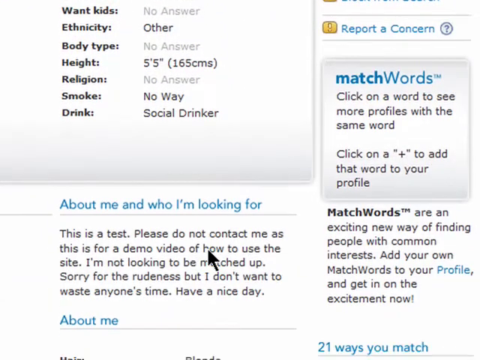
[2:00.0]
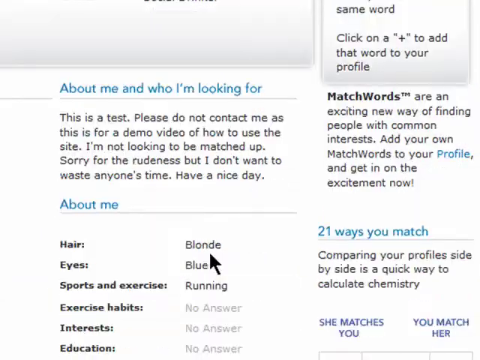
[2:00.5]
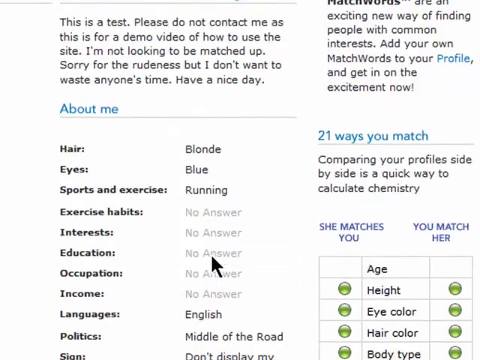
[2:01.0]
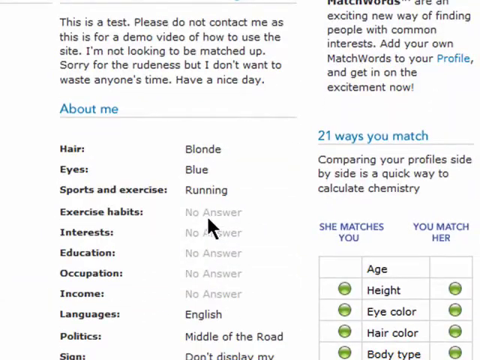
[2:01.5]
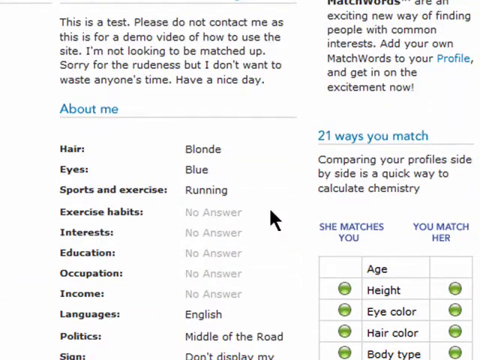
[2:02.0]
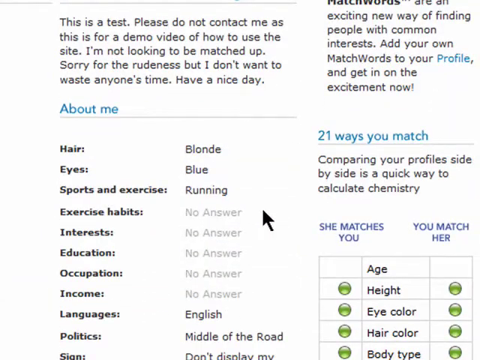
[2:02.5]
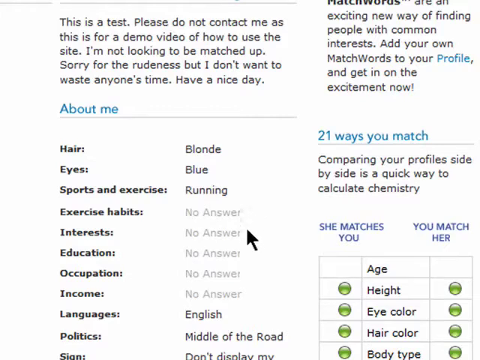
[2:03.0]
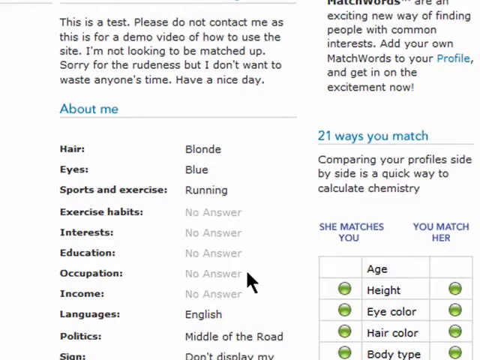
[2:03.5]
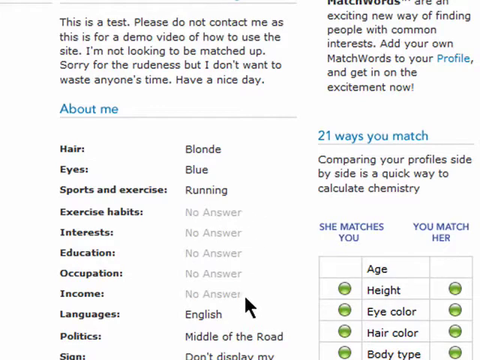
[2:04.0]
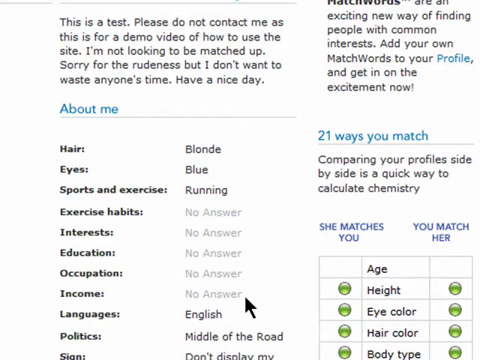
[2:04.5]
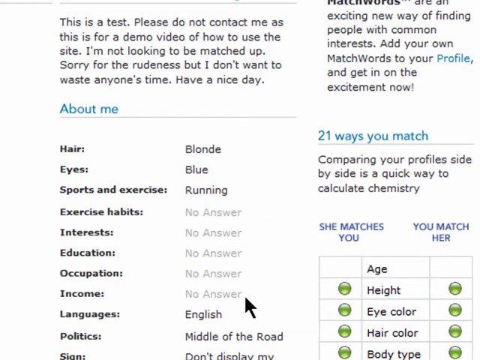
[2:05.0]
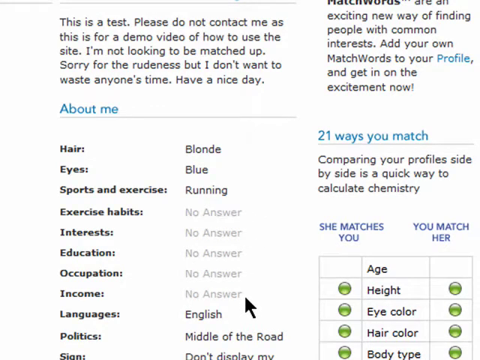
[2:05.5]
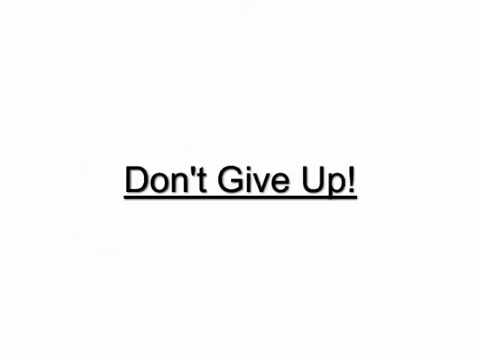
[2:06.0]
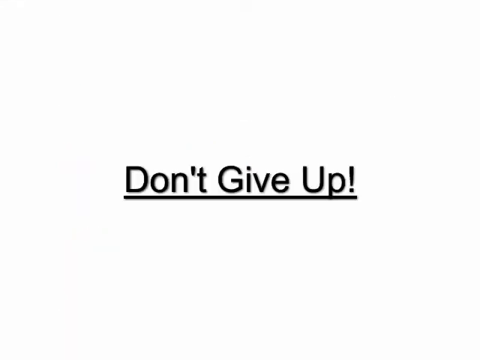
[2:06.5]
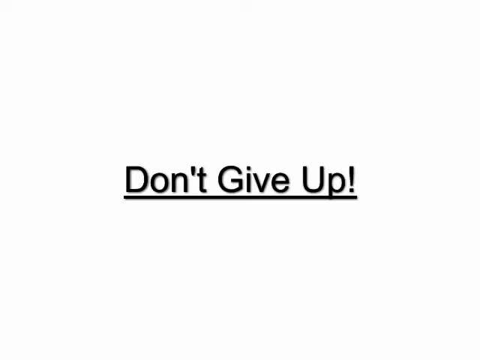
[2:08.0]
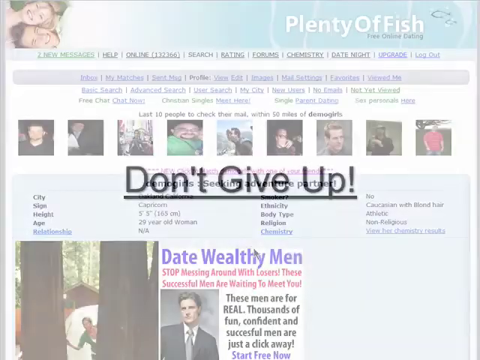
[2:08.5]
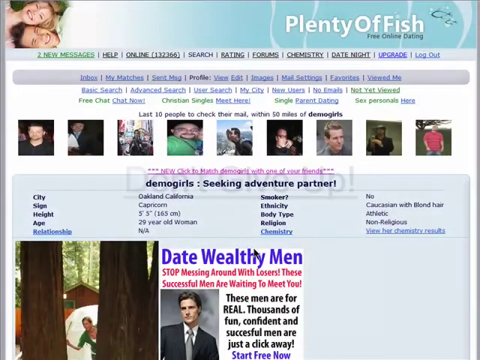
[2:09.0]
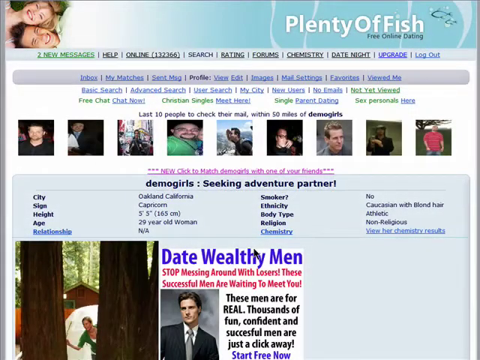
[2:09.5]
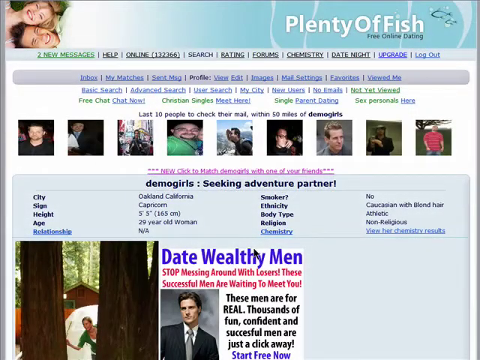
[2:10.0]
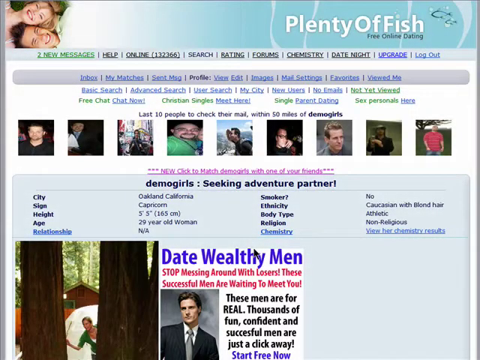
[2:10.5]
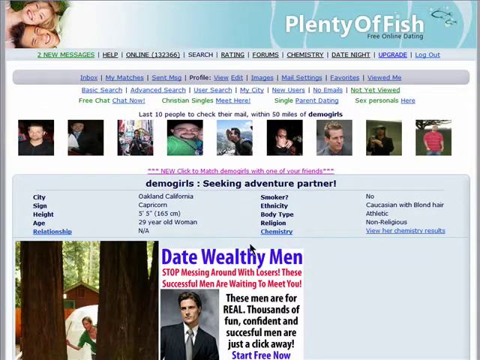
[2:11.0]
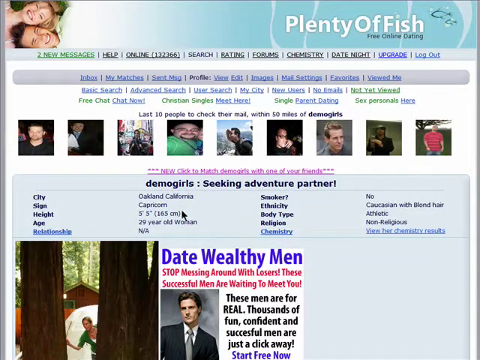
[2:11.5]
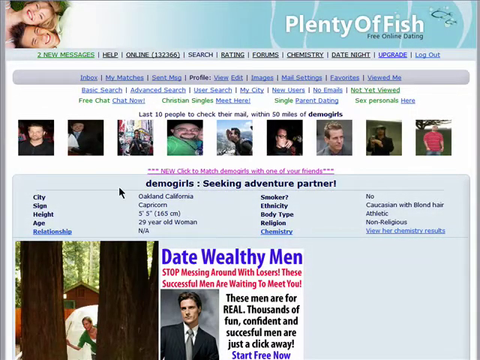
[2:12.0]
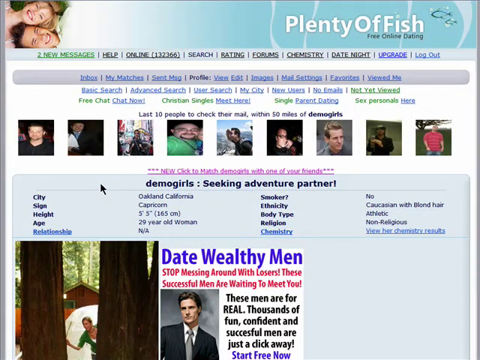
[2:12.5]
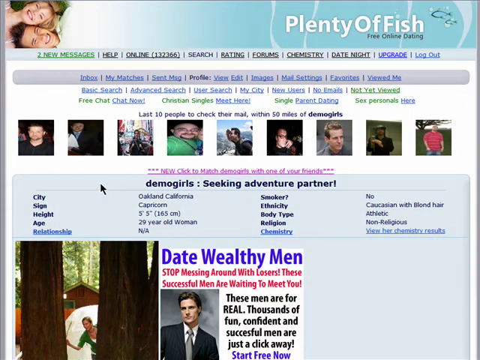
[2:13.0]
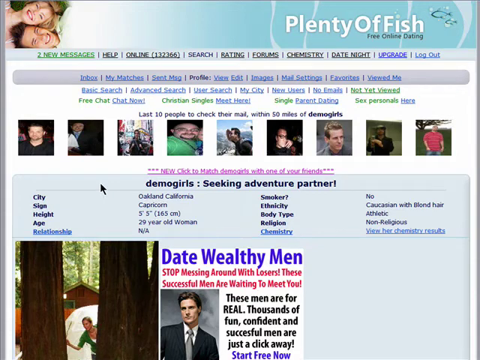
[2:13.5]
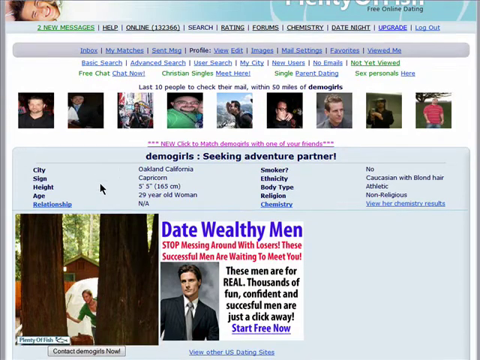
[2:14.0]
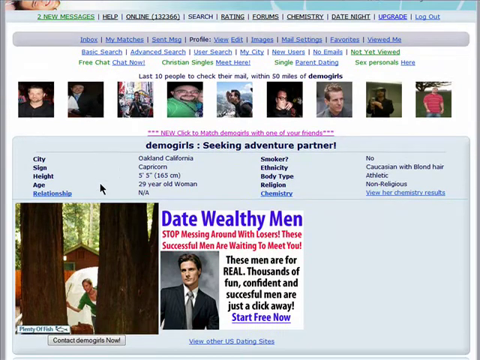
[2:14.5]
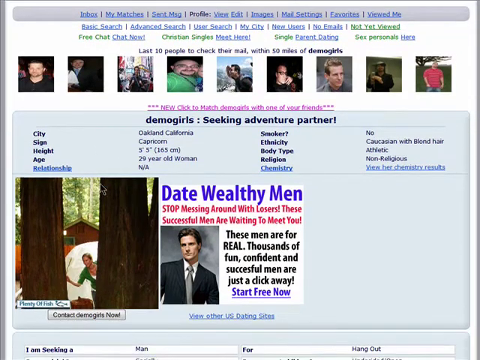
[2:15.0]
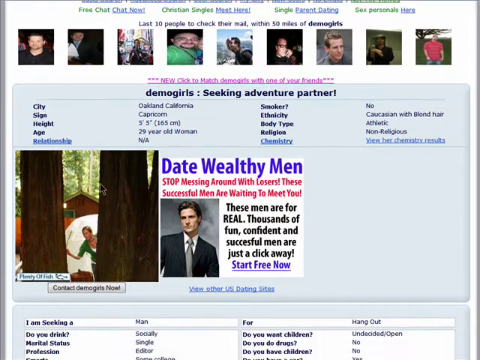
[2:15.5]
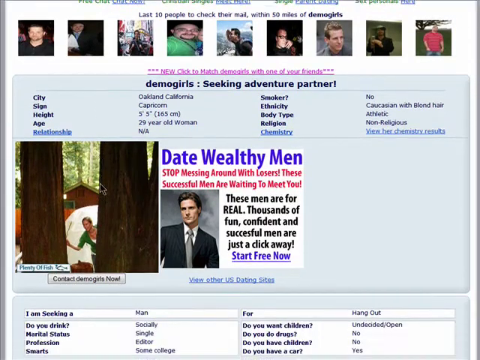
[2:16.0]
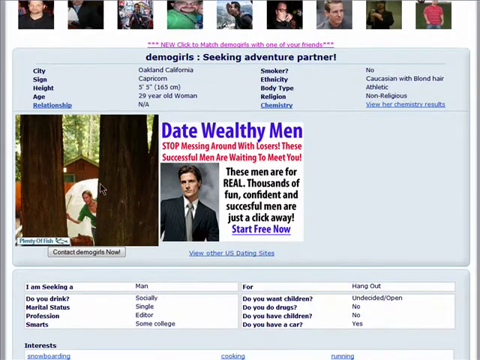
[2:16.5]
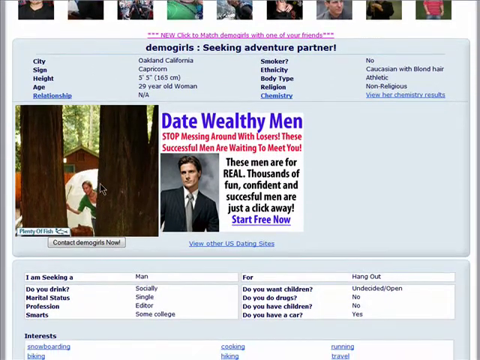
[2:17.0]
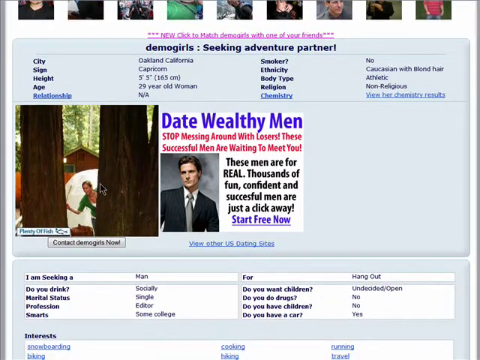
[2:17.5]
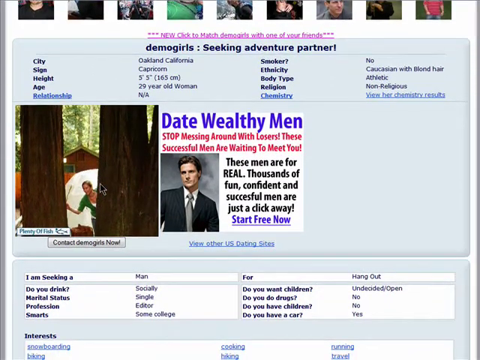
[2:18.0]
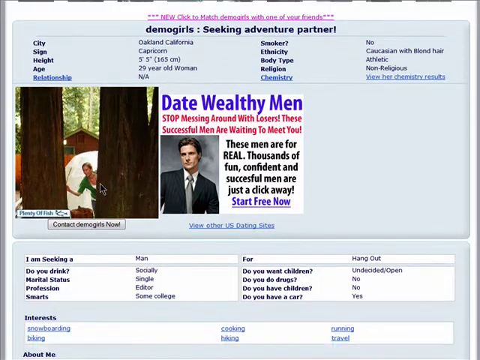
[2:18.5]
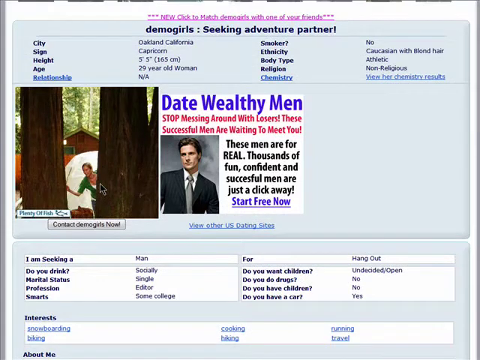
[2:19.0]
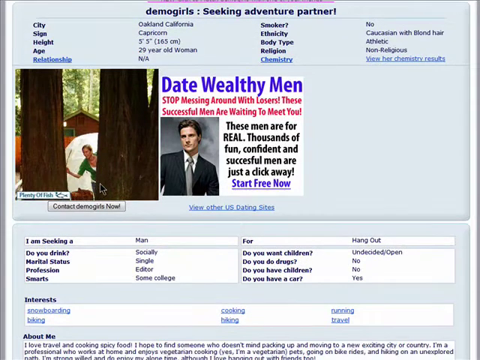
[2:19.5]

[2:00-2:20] A screenshot of a match.com profile initially shows just the lower left quarter of the box containing demographic information, which has a gray background with bold text for the categories and lighter text for the answers. Underneath is a small paragraph with a blue title reading "about me and who I'm looking for". On the right-hand side is a card with a blue title reading "Matchwords" and the description "click on a word to see more profiles with the same word. Click on a plus to add that word to your profile." The page scrolls down, and a black arrow cursor highlights a second About Me section listing basic features such as hair, eyes, sports and exercise, and body type. This fades out to a white screen with black text reading "don't give up". Next comes a screenshot of a Plenty of Fish profile page with multiple navigation menus under the title bar. Below the navigation is a horizontal row of square pictures in a section titled "the last 10 people to check their mail within 50 miles of Demo Girls". Underneath is a blue card with basic demographics and two images below it.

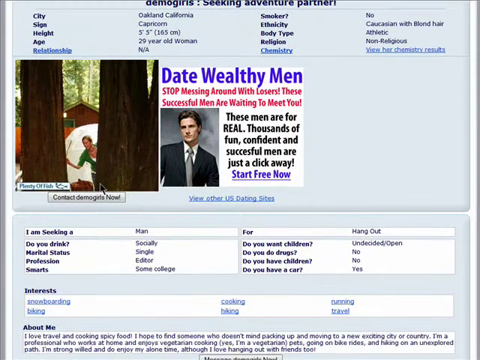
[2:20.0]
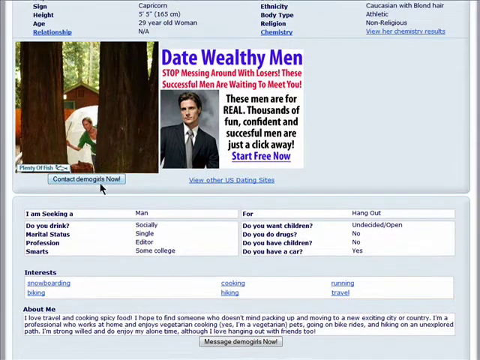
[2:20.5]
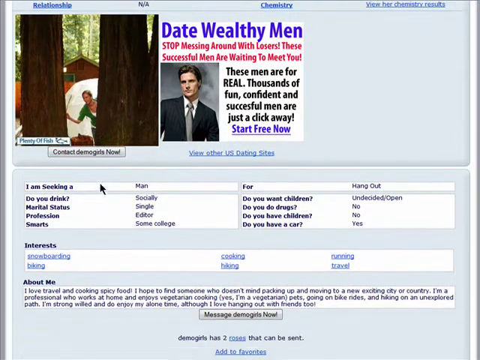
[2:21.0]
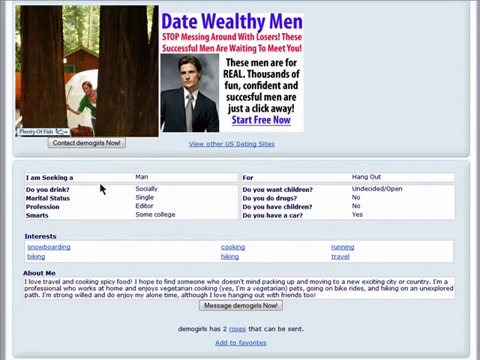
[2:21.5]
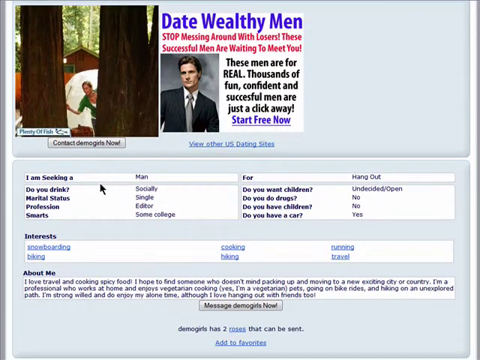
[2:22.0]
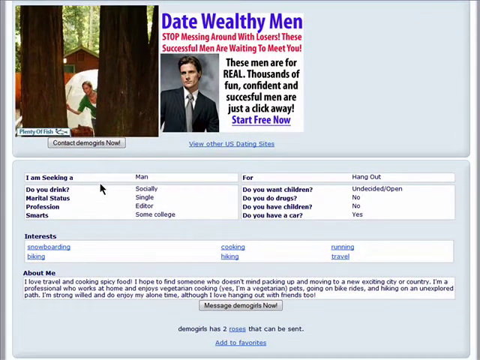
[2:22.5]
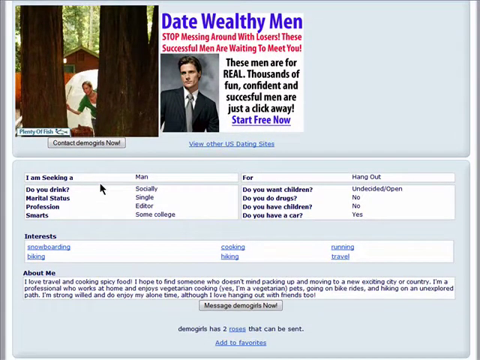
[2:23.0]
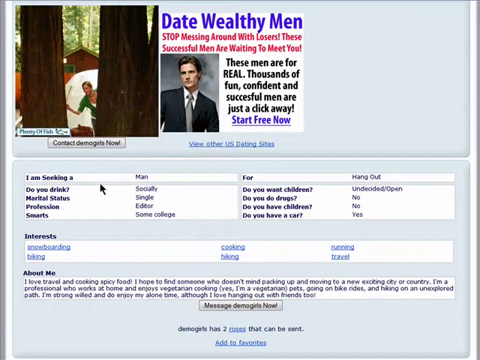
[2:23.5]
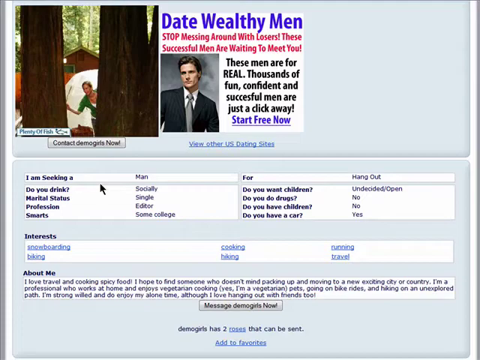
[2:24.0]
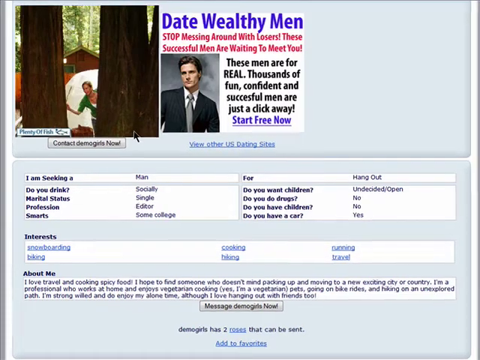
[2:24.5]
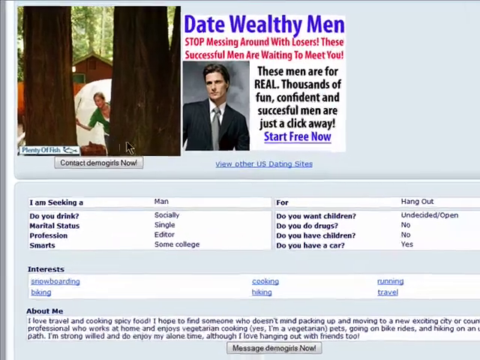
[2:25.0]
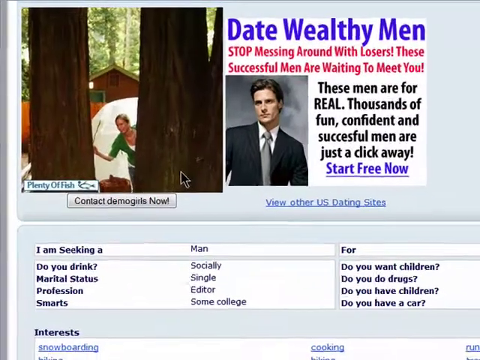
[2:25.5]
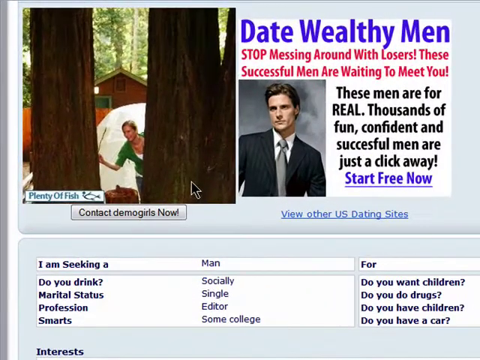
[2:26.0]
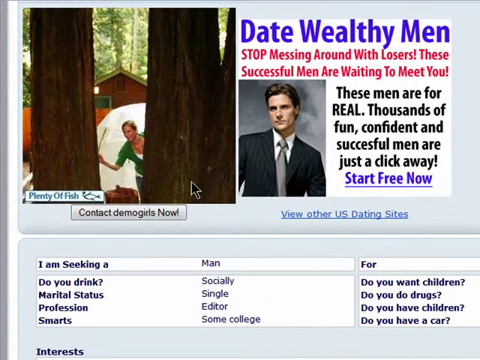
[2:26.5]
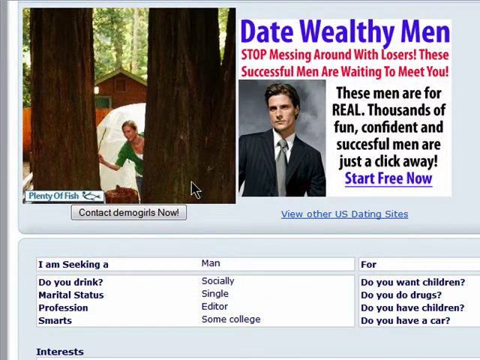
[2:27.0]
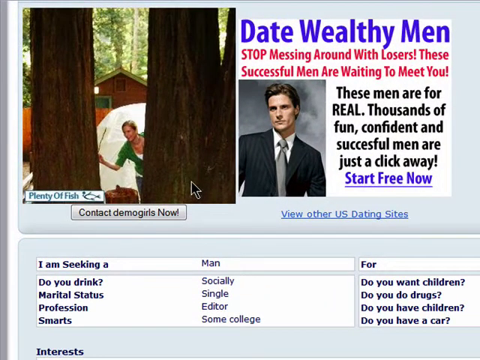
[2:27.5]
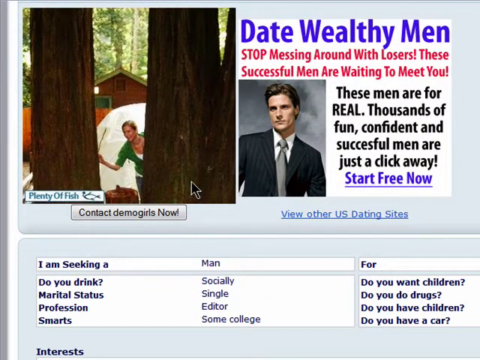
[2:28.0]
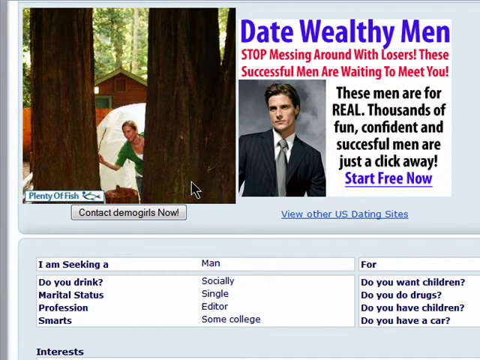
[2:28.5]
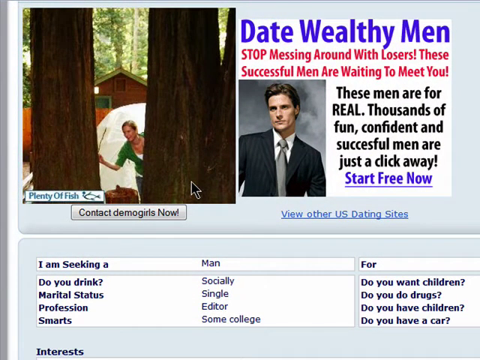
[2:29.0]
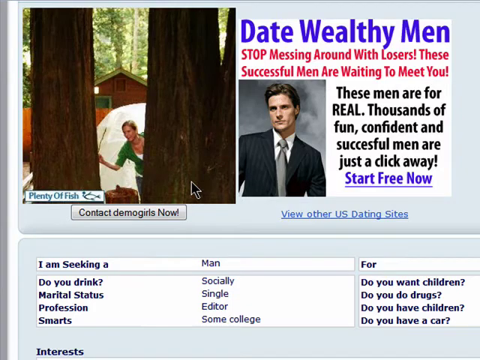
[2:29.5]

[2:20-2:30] A dating profile is shown with its top section out of view. Two images are visible: one shows a woman, and the one on the right has a small picture of a man in a suit in the lower left corner and a blue title reading "Date Wealthy Men". Under the pictures are basic demographics such as do you drink, marital status and profession, with do you want children and do you do drugs on the right-hand side. Below the demographics is a box for interests, with an about me box underneath that. A gray button at the bottom gives the option to message demogirls now. A black arrow cursor moves up to hover over the picture on the left as the screen zooms in toward it, and the page then begins to scroll up toward the top.